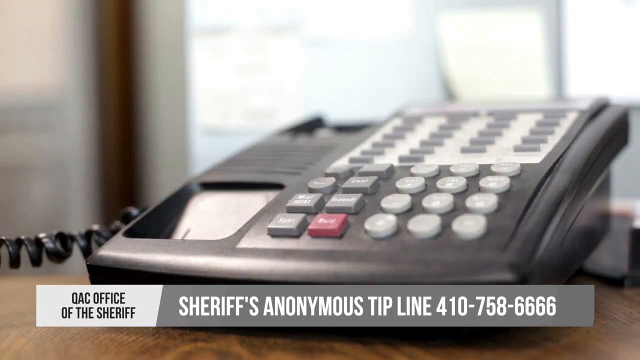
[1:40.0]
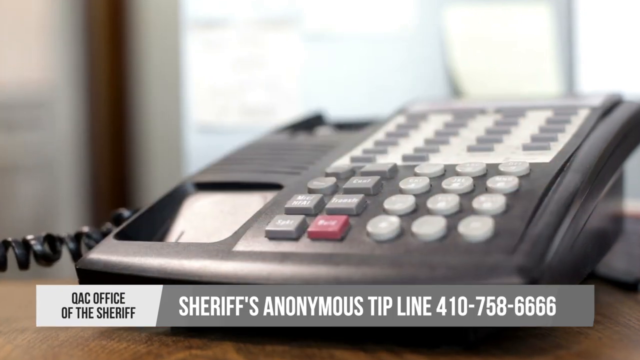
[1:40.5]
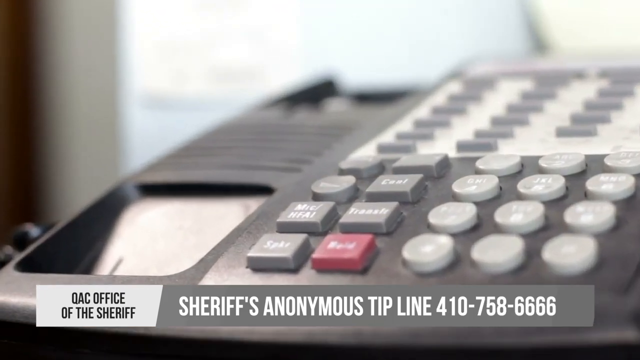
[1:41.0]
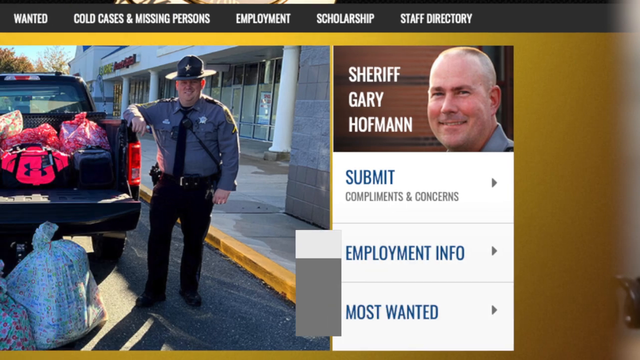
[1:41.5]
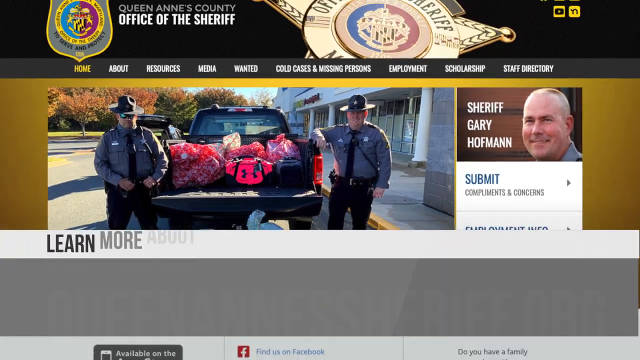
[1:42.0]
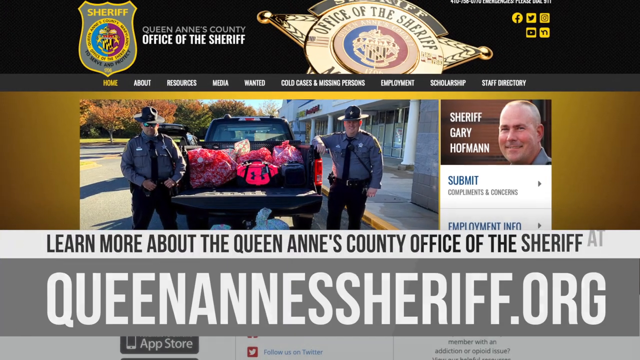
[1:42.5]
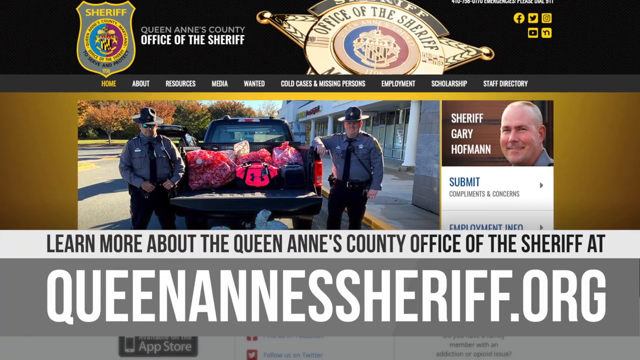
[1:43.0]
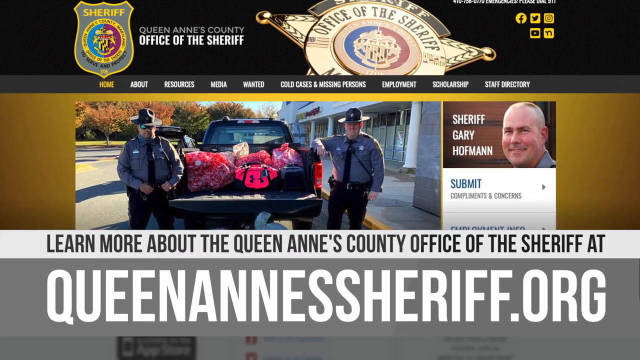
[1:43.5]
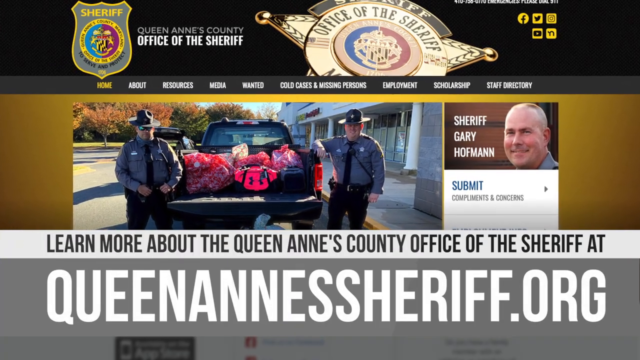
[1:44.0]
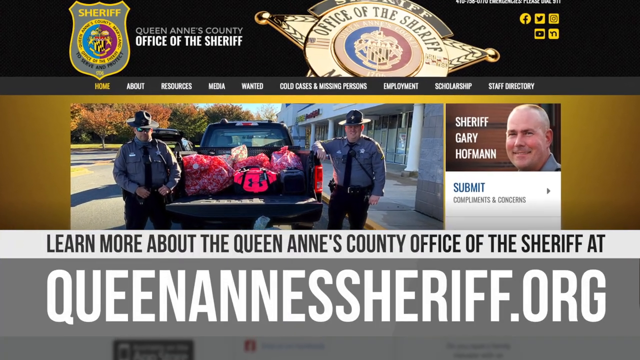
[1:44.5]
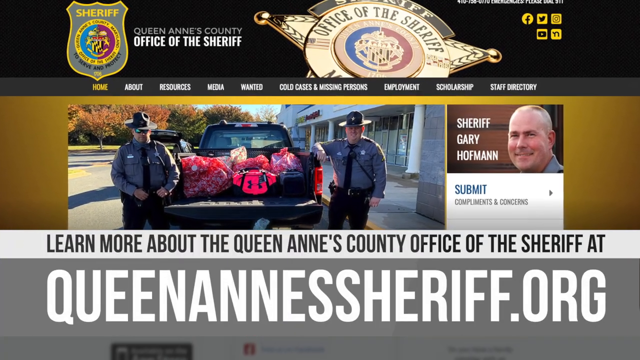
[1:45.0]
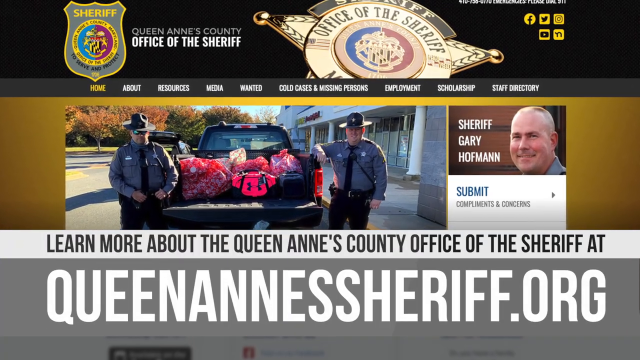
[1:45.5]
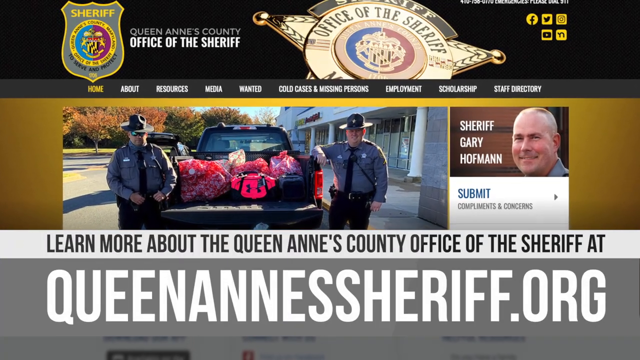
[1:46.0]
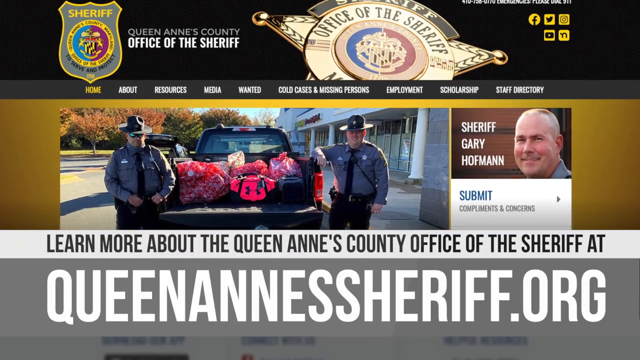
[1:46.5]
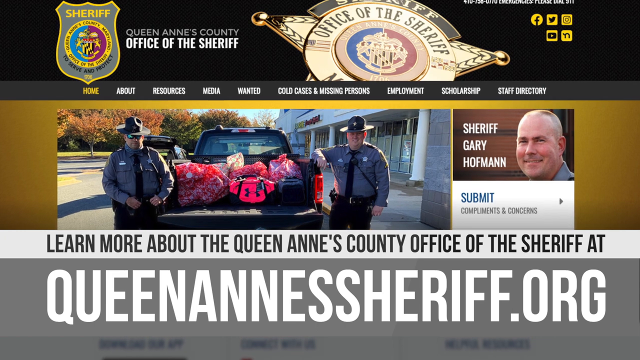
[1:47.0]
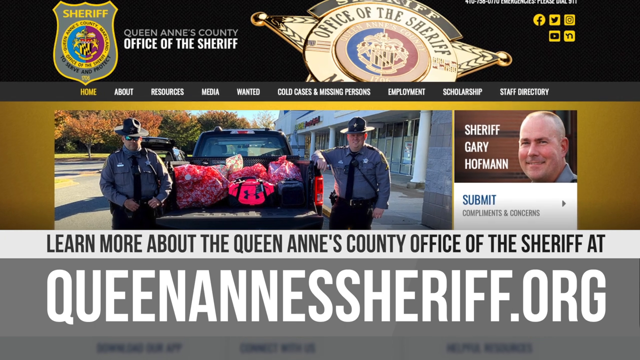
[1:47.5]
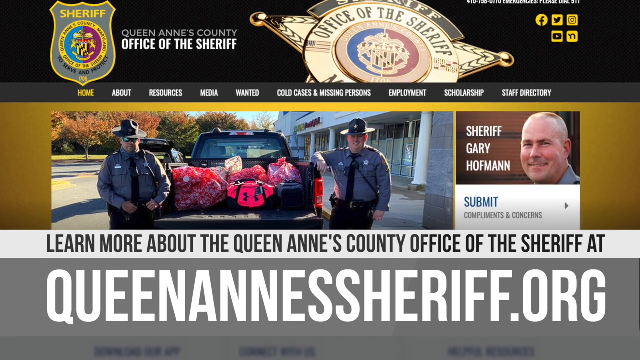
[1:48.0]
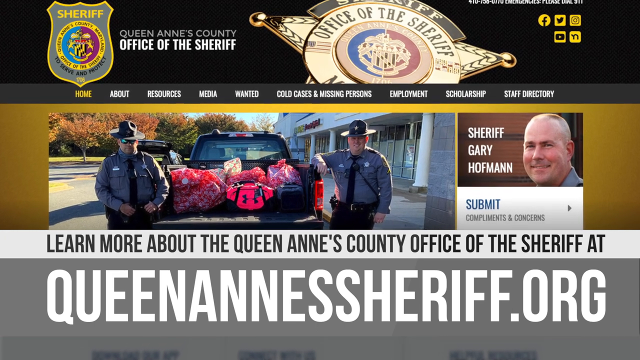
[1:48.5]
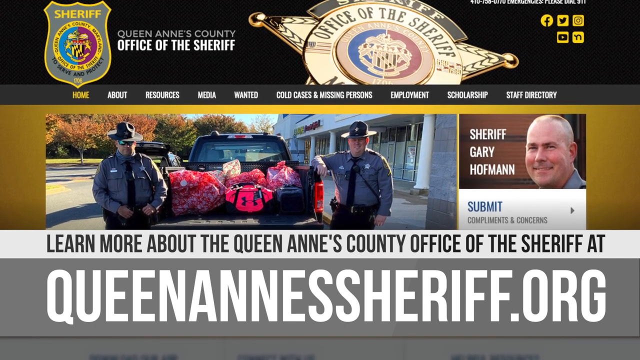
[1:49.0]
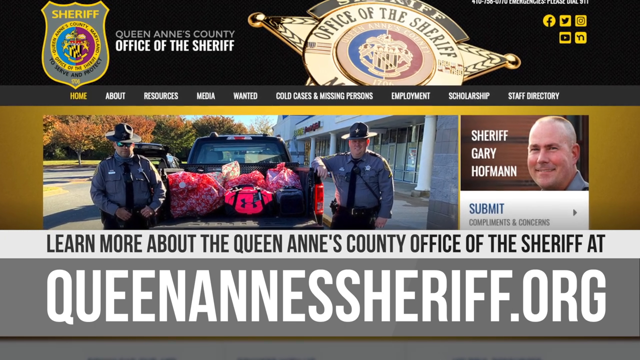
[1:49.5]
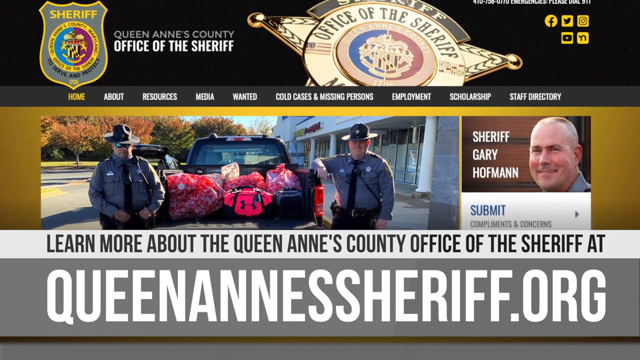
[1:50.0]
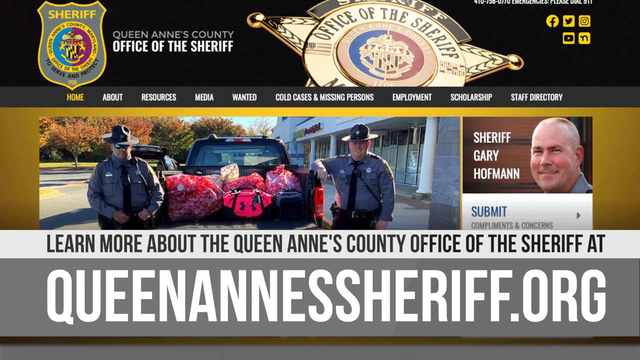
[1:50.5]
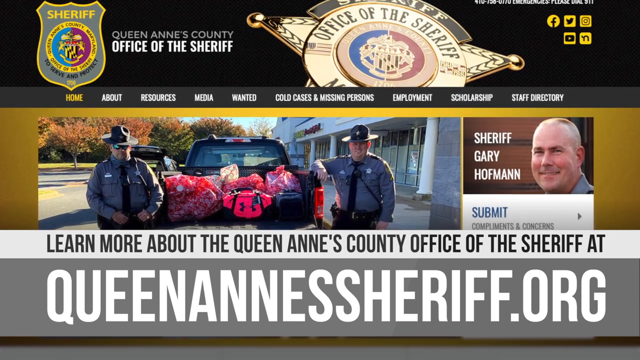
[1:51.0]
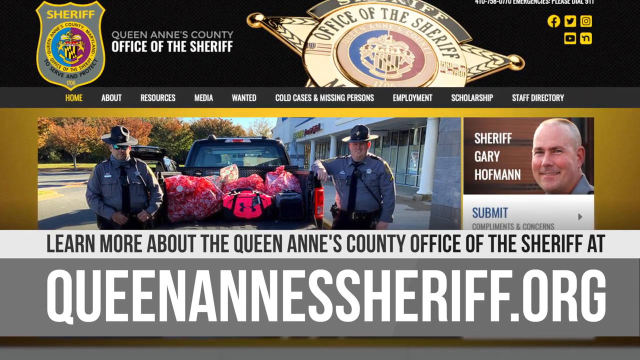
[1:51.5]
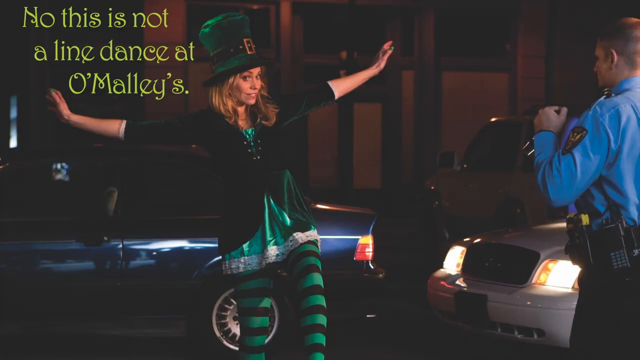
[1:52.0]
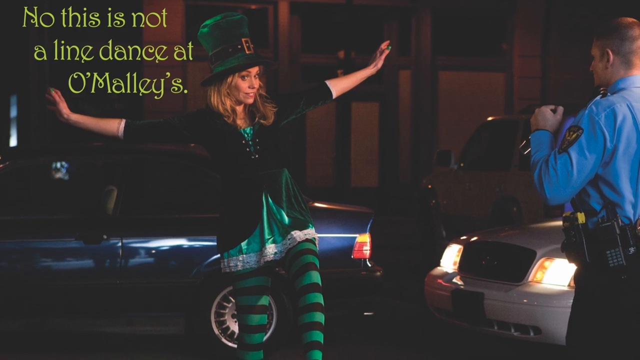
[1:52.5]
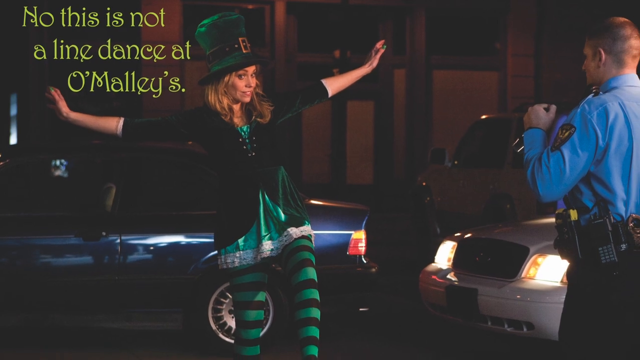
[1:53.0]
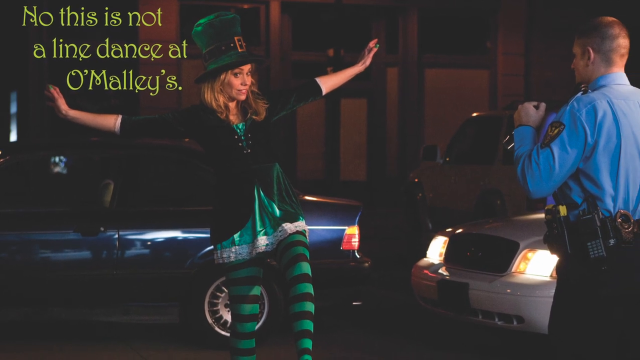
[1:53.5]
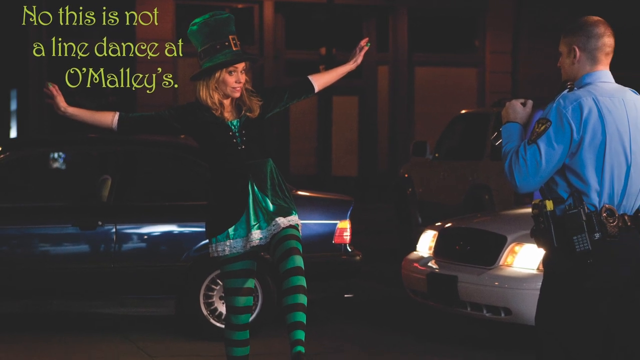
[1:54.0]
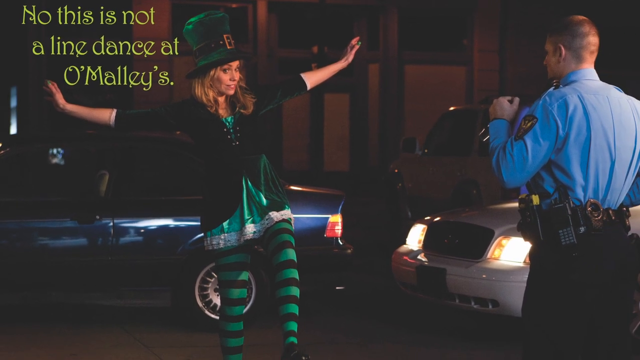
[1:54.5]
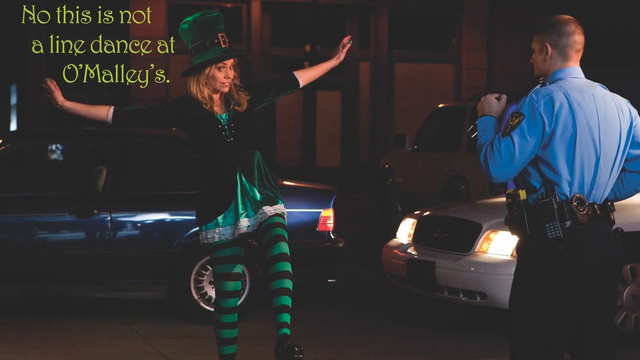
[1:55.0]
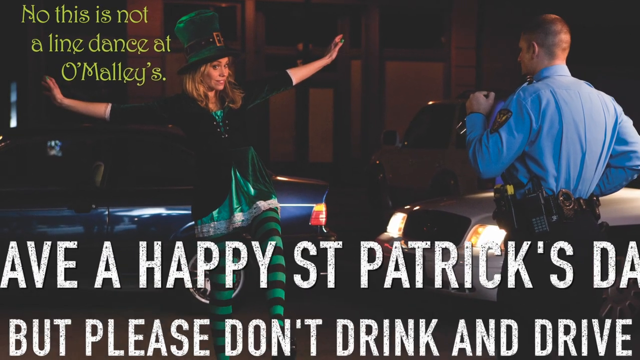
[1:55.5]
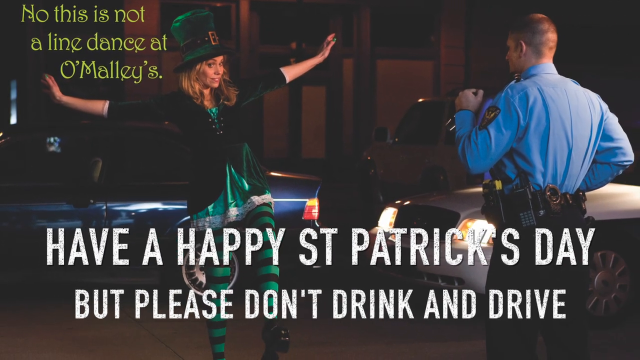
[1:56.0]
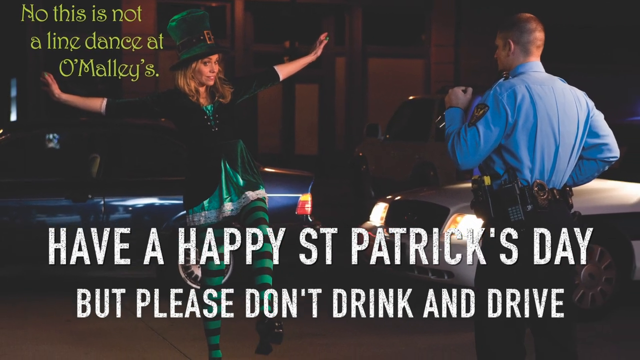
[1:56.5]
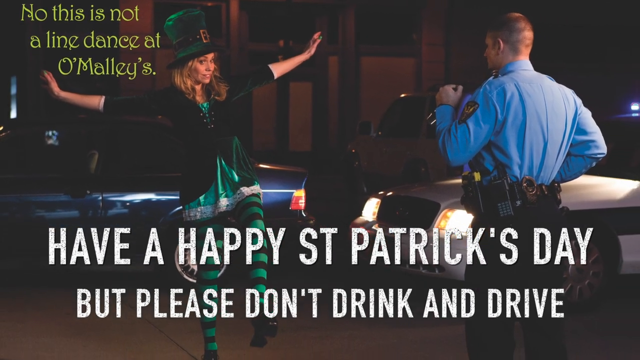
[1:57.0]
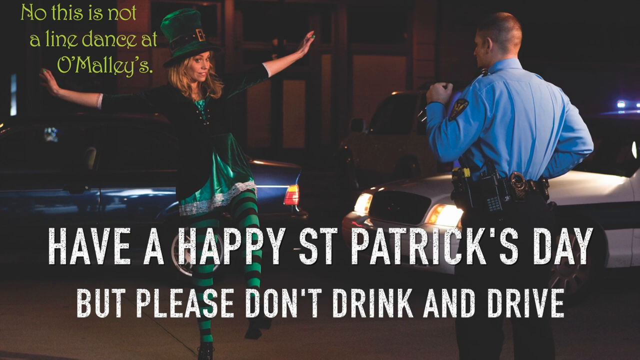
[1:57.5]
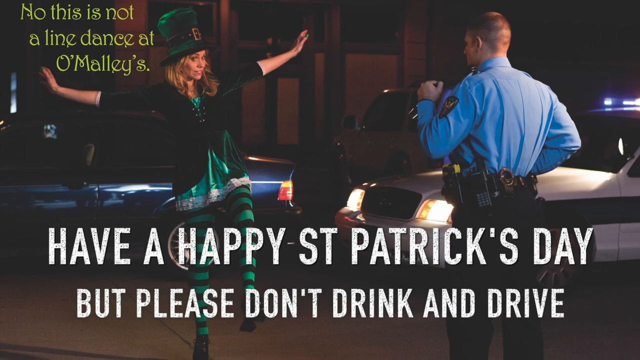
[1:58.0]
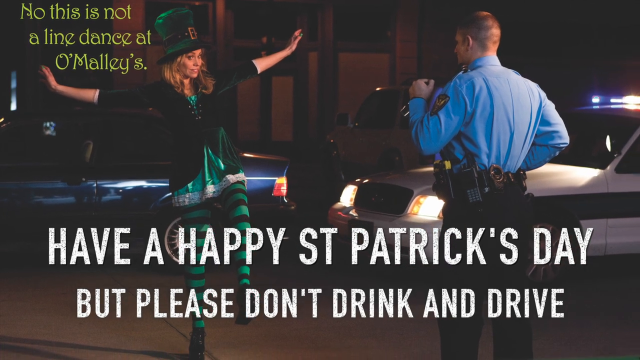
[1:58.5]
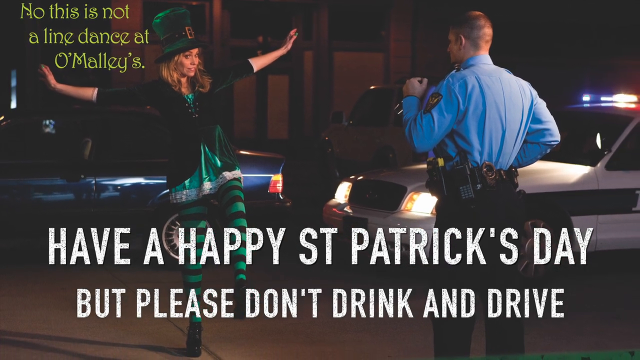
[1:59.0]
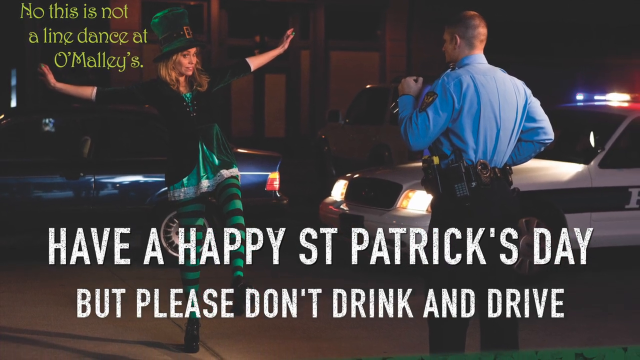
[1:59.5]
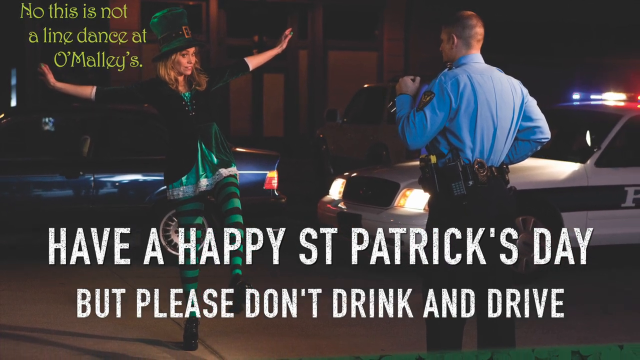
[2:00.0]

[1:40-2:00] The homepage of an internet site is shown. At the top of the site is a rectangular section with a black background, with a logo shaped like a sheriff's badge on its left side. In the central part of the frame, a section of the site has an orange-yellow background with various images enclosed in rectangular windows. The camera zooms very slowly toward the web page. The video ends with a photo of a police officer and a woman dressed in green, with two white lines of text at the bottom of the frame and some yellow text lines in a particular font in the upper left corner. The camera zooms out very slowly, widening the image slightly.